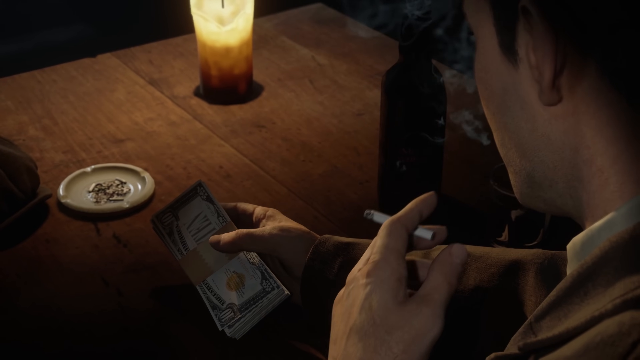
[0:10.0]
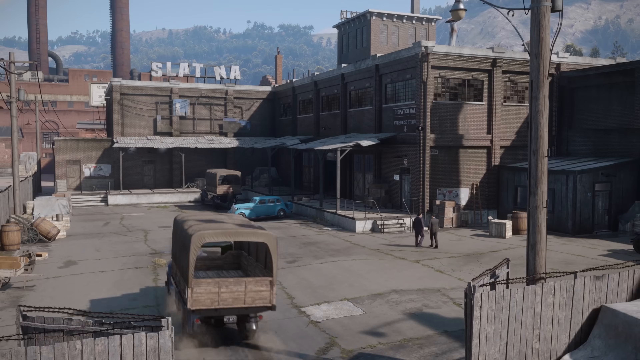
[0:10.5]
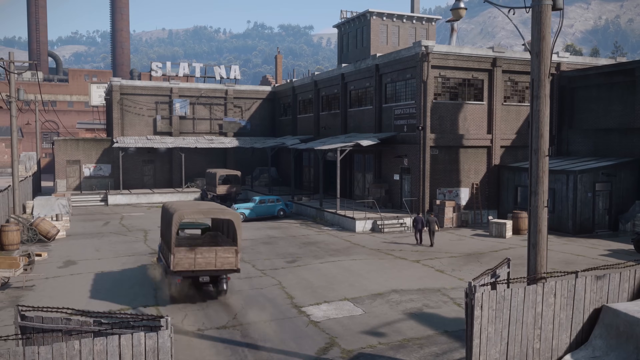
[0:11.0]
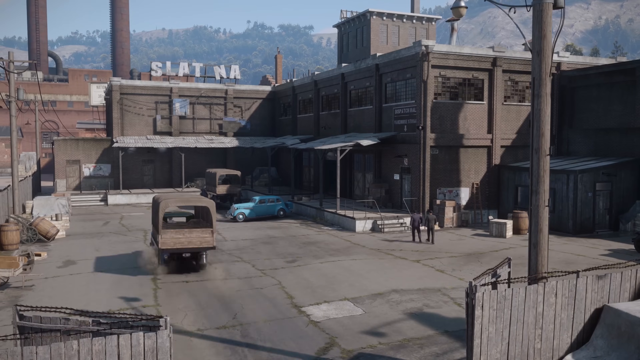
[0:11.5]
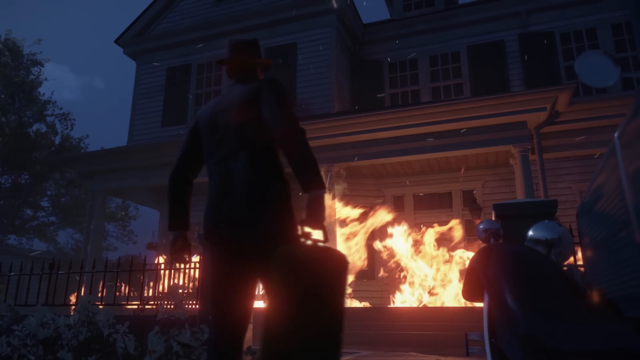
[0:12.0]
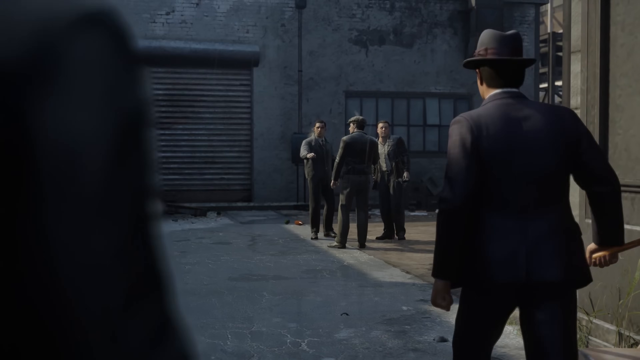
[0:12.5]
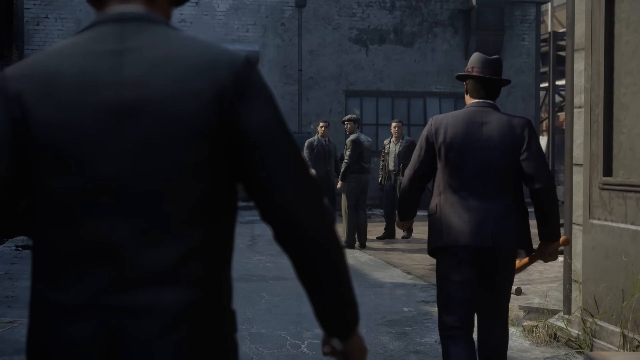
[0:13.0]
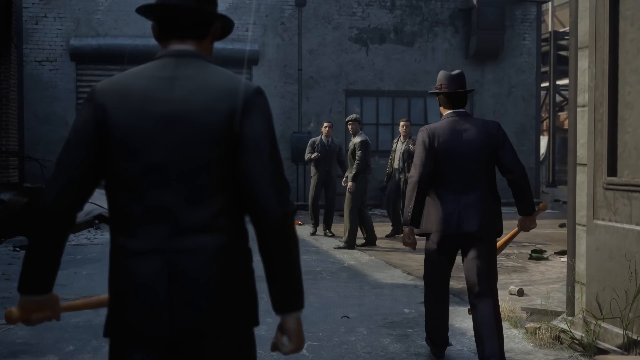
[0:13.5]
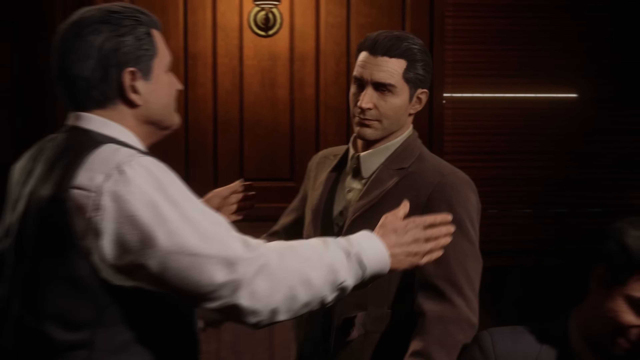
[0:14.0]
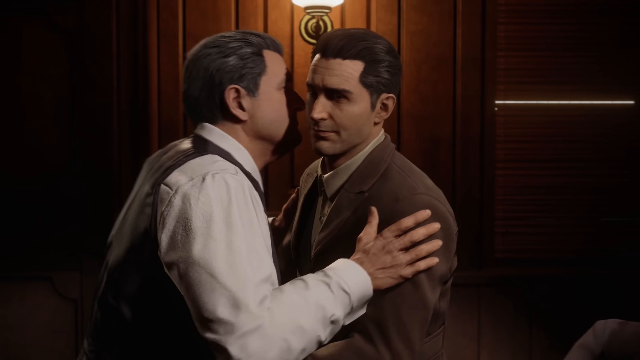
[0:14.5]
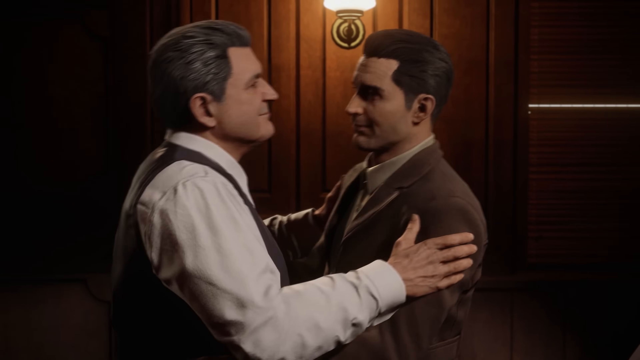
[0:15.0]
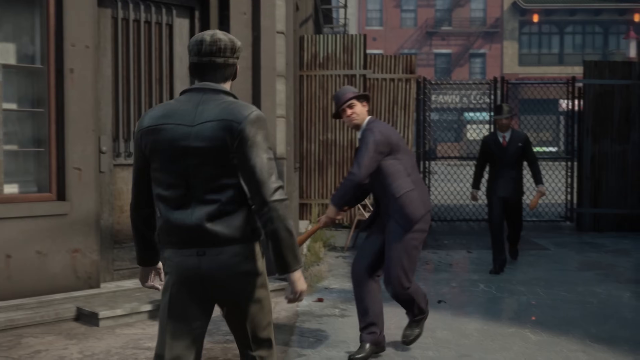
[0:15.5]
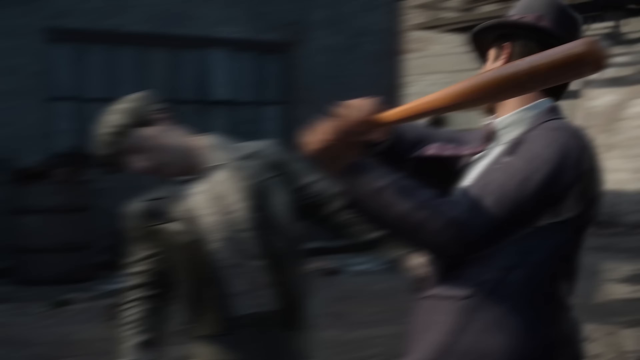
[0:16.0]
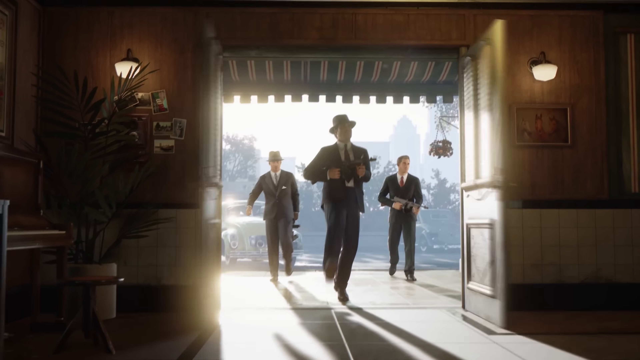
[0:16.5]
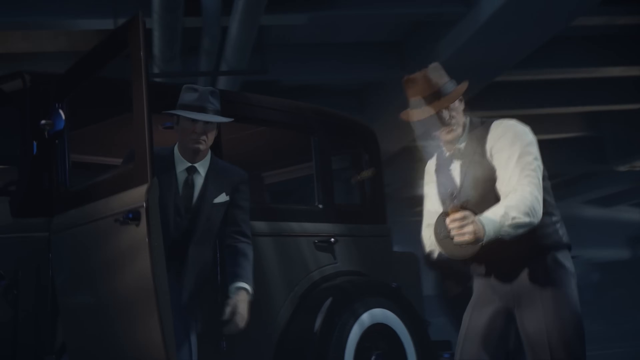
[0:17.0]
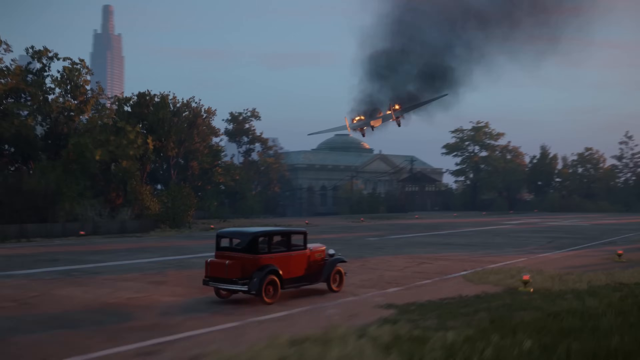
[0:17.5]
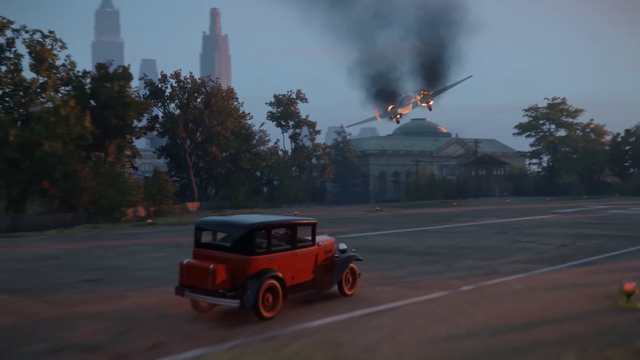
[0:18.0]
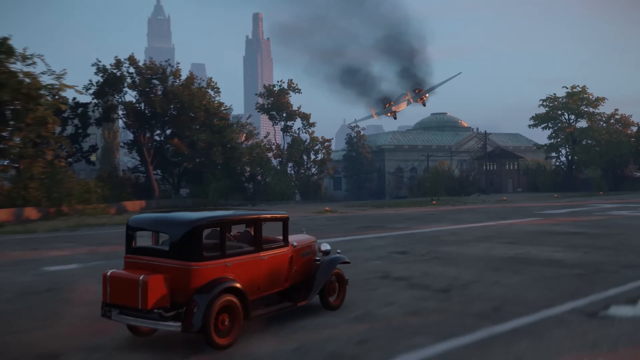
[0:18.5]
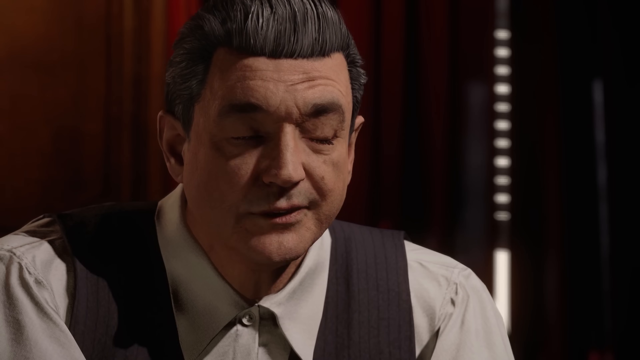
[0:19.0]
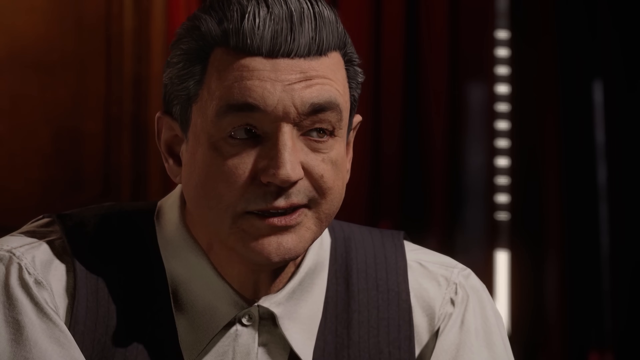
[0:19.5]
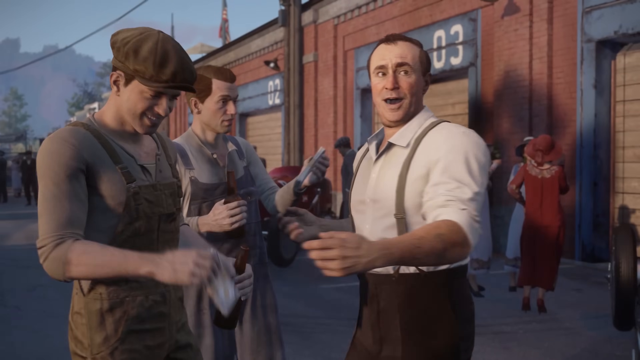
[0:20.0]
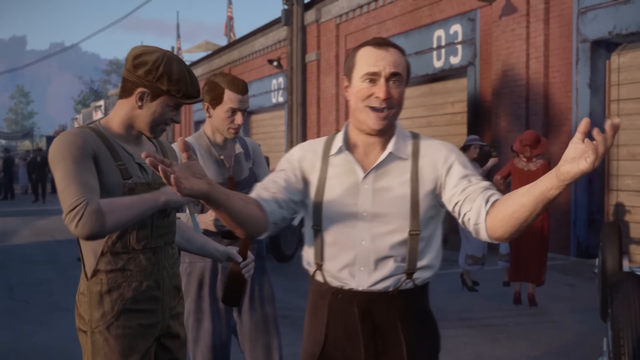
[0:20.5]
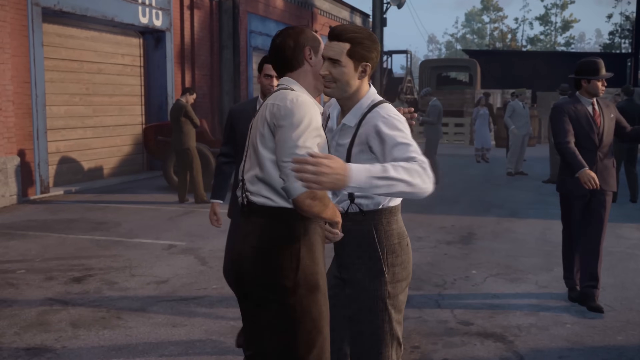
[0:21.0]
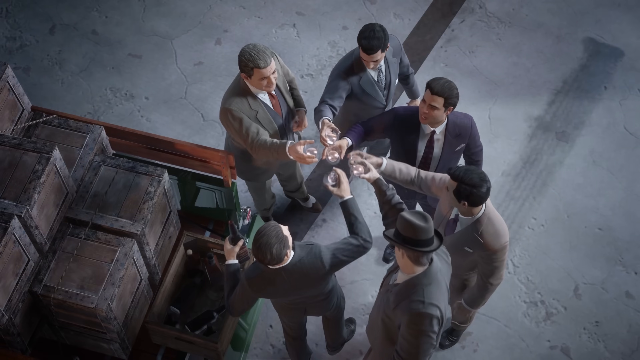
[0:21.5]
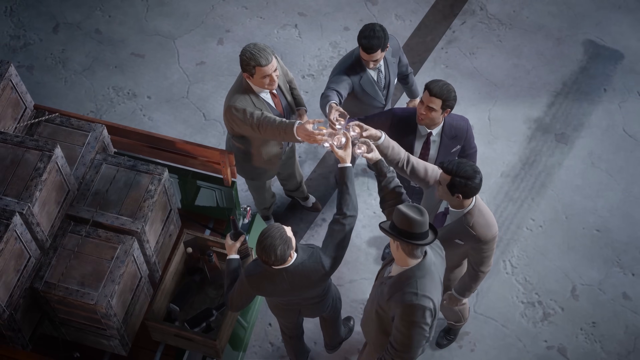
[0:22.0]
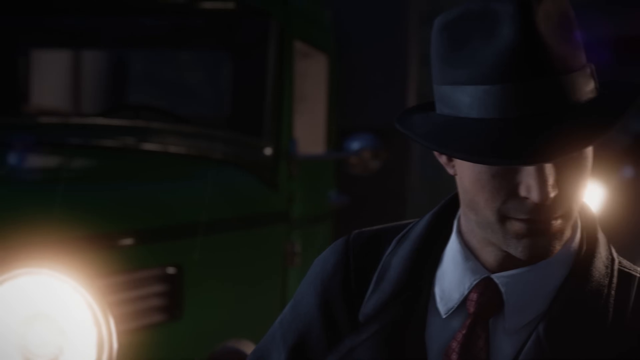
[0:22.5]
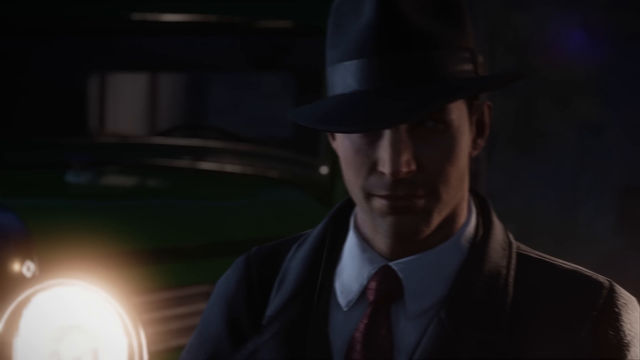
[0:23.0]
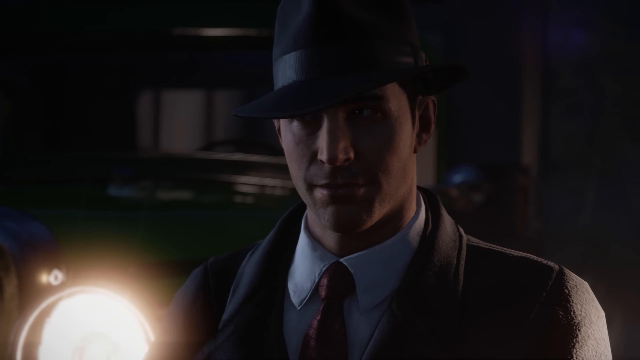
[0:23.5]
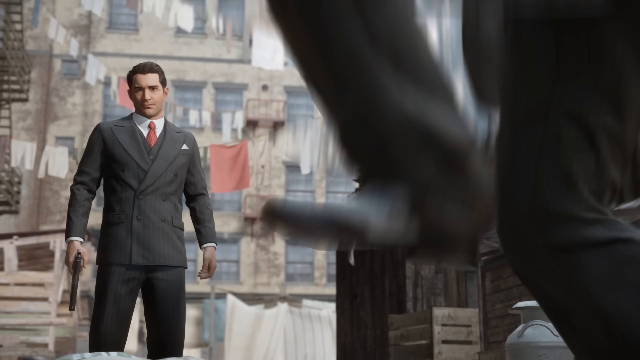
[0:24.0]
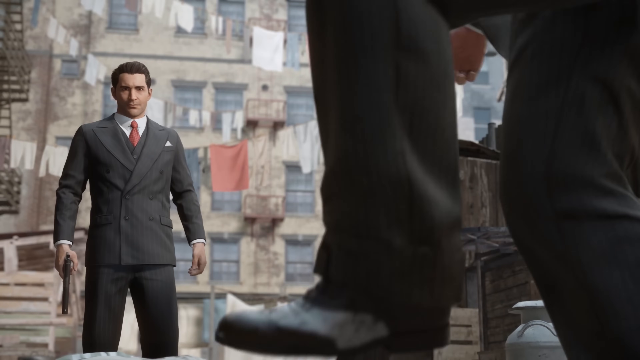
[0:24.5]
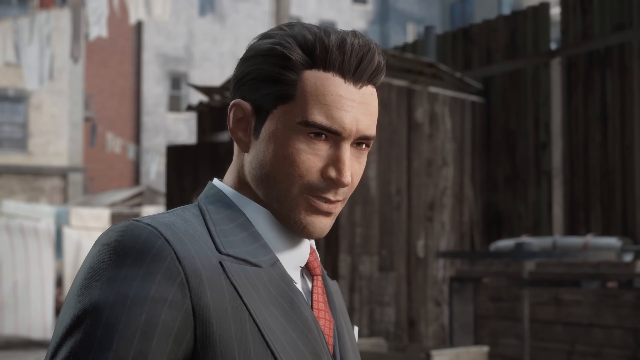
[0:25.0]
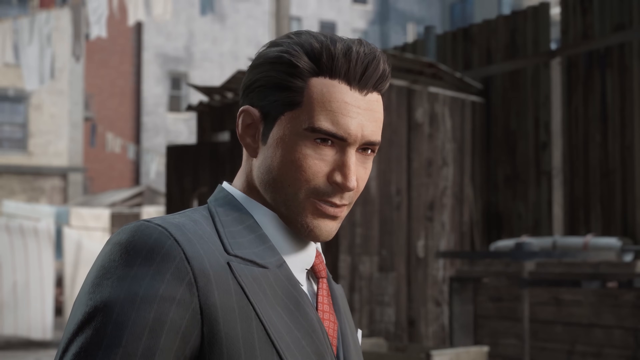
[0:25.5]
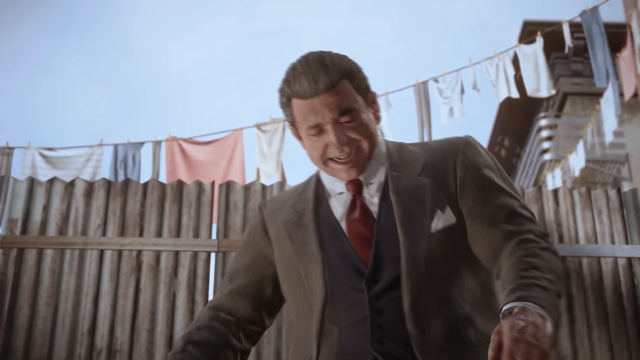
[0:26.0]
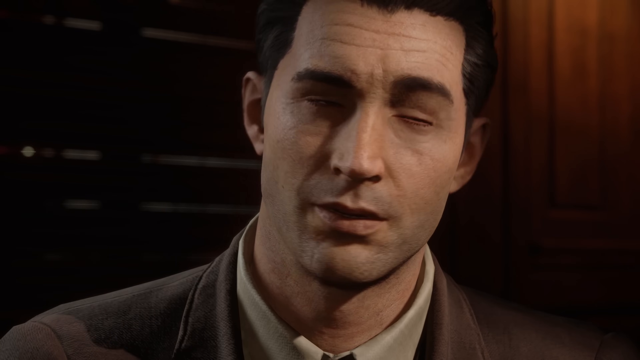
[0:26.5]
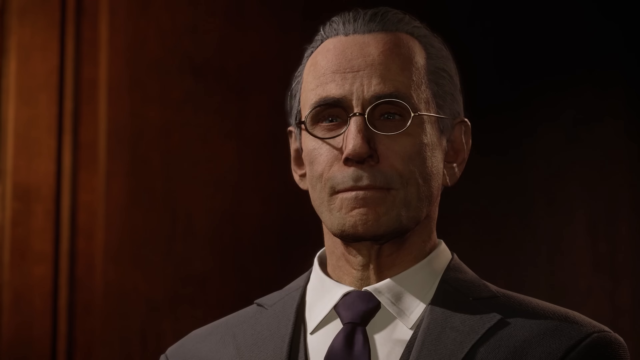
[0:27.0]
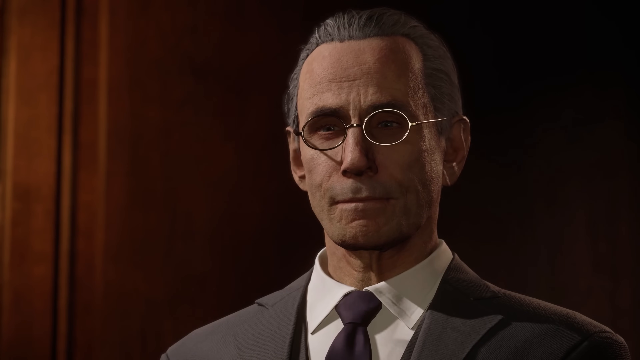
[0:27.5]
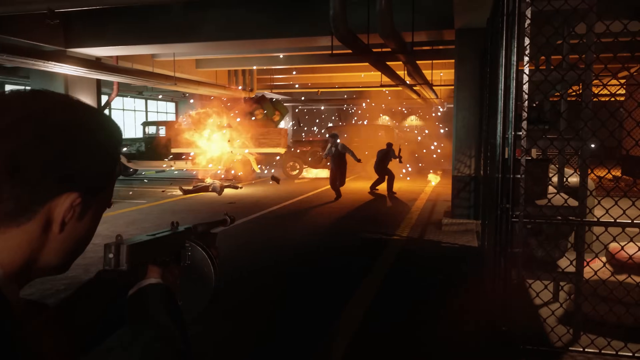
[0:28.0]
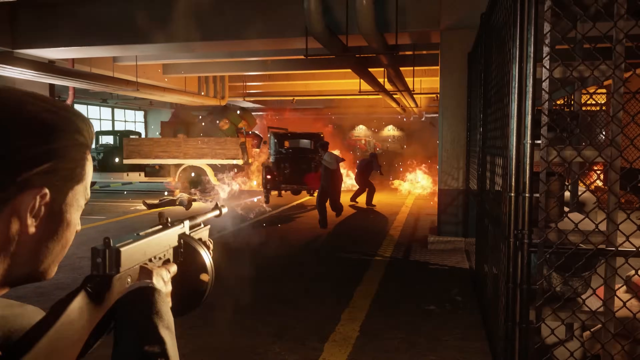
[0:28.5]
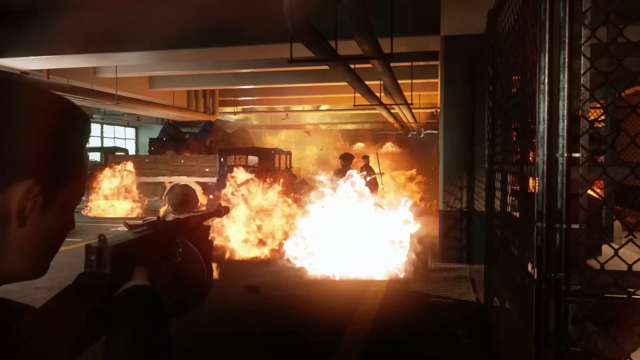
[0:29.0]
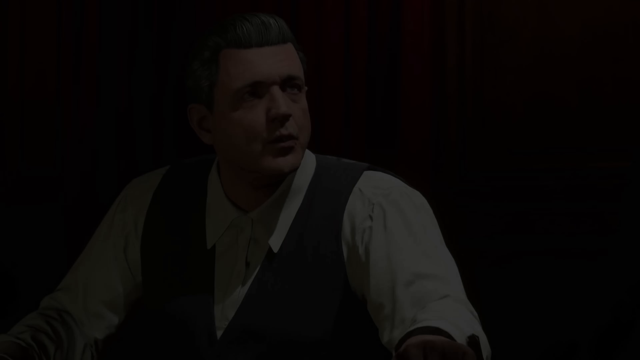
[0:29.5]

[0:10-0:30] A man holds a cigarette in his left hand and a wad of money in his right hand. He is sitting at a wooden table with a candle, a bottle of beer and an ashtray on it. The scene moves very quickly to a truck driving into a car park by a building, and then quickly to a man stepping back from a house at night; the house is on fire. Some men are briefly seen standing around in the street. Next, a man walks towards another, who embraces him and kisses him first on his left cheek and then on his right cheek. Everything moves very quickly. Some men shoot into the distance. A red and black old-fashioned car drives along a road with a smoking plane flying above it; the plane looks like it might be about to fly into a building. A man with brushed-back hair and slightly unusual eyes sits at a table talking to somebody. A group of six men, all wearing suits, clink glasses of liquid together while standing next to a truck filled with boxes. Two men stand outside, and one of them appears to be stamping hard on something. Then two men nod at each other, and finally there is what appears to be an indoor car park with lots of flames and somebody shooting a gun.